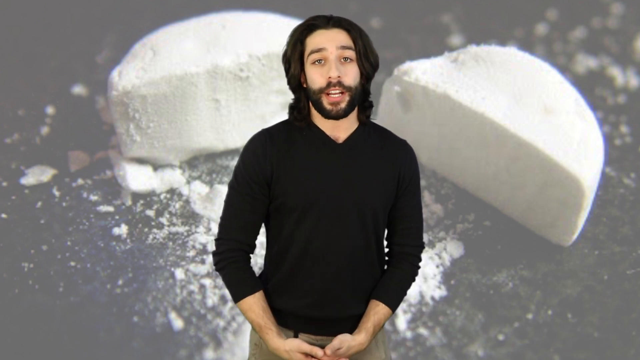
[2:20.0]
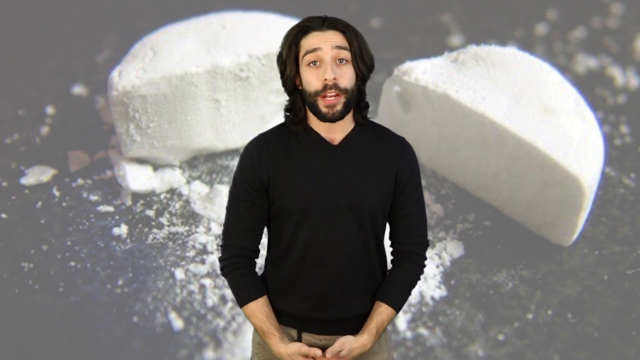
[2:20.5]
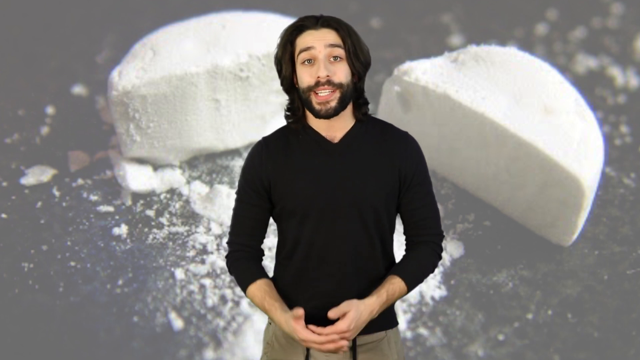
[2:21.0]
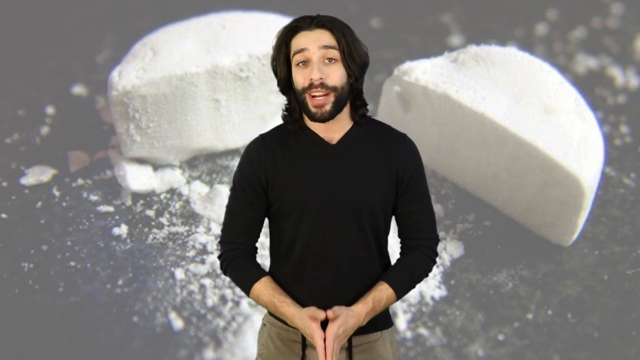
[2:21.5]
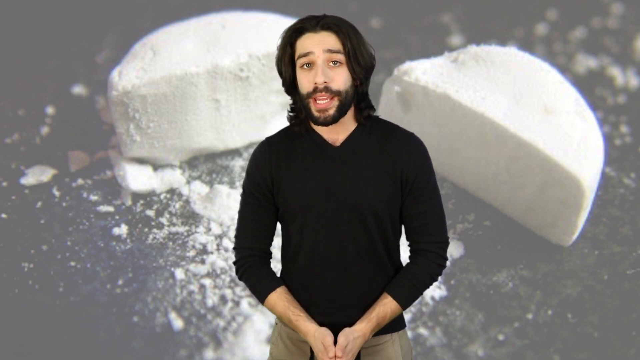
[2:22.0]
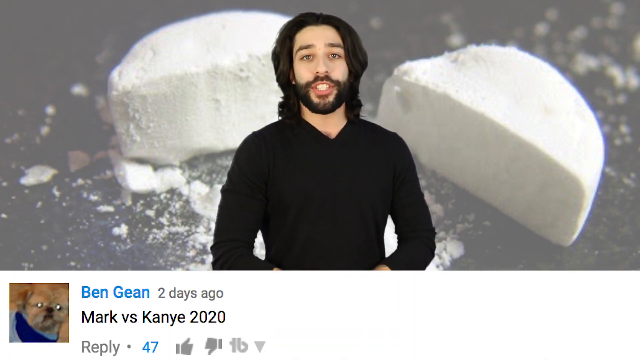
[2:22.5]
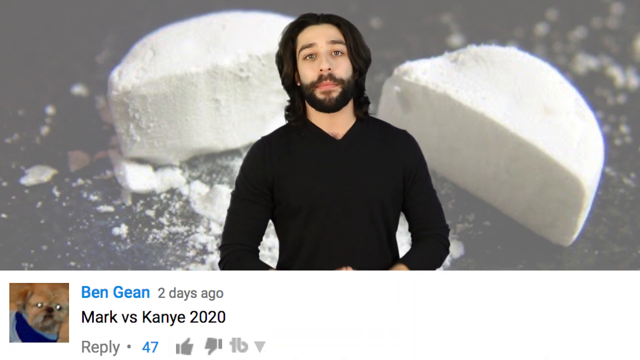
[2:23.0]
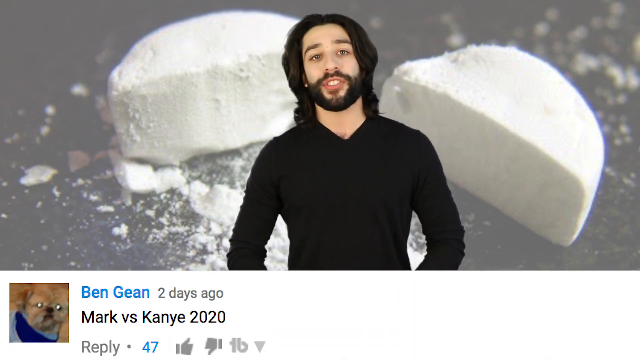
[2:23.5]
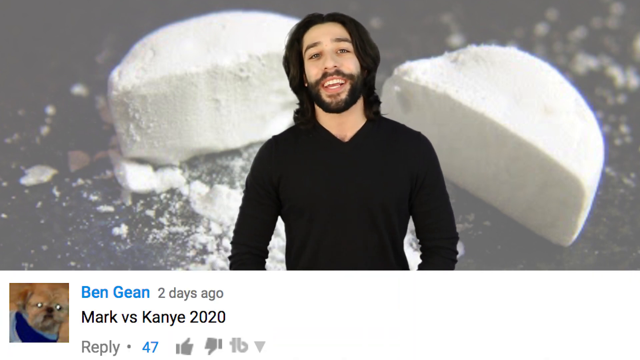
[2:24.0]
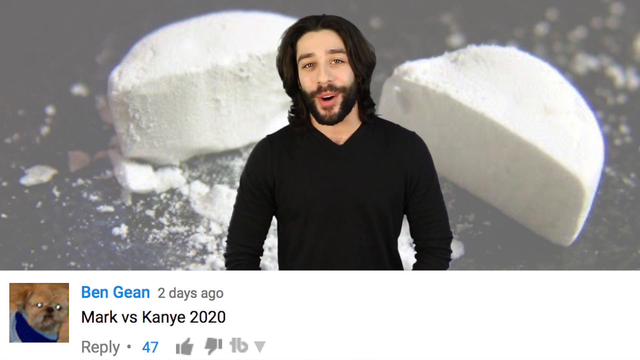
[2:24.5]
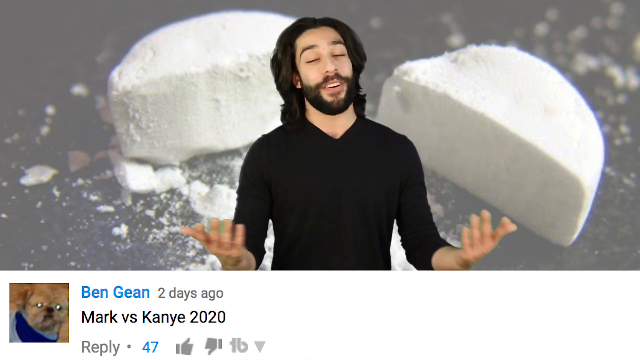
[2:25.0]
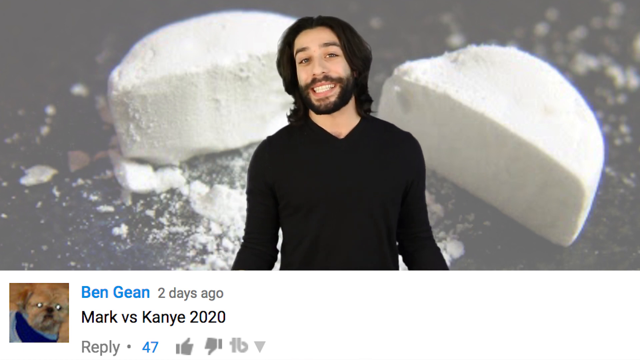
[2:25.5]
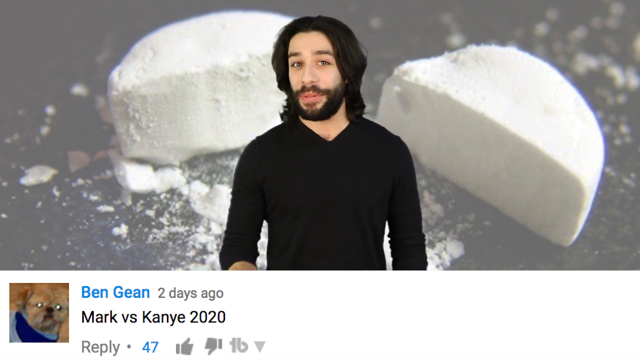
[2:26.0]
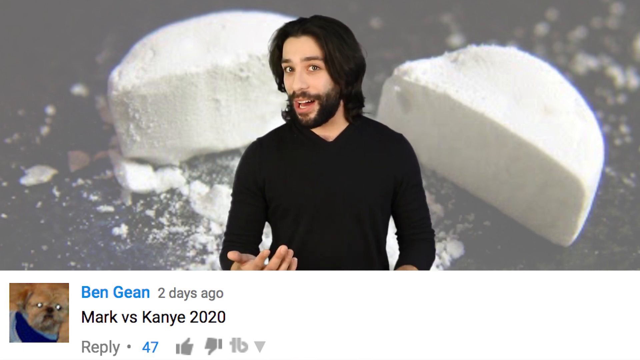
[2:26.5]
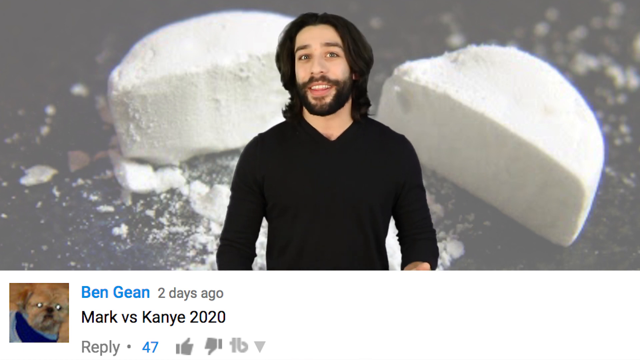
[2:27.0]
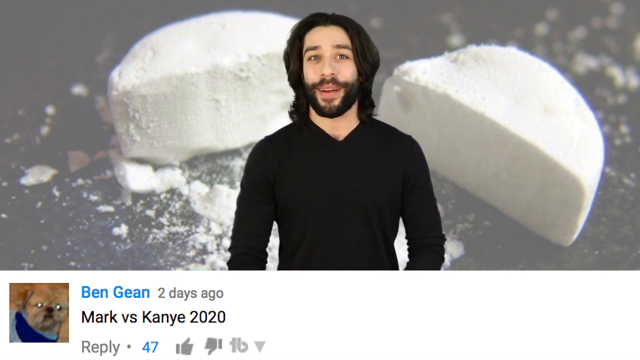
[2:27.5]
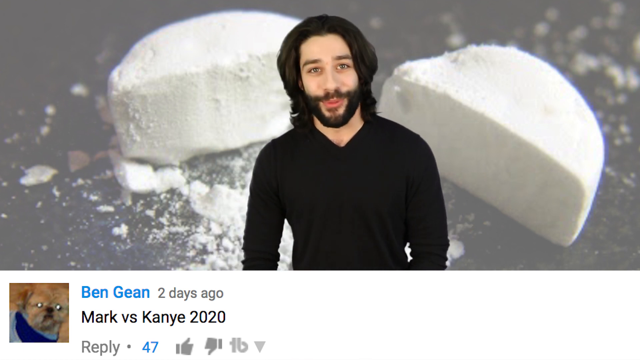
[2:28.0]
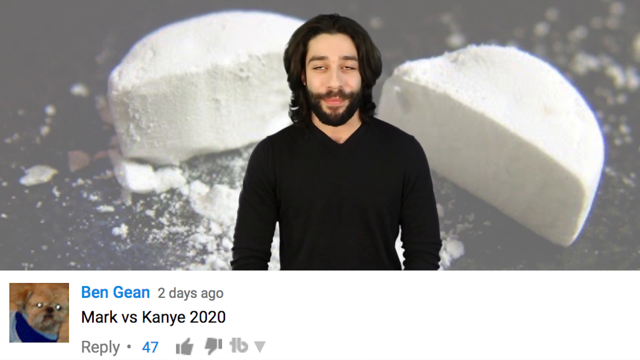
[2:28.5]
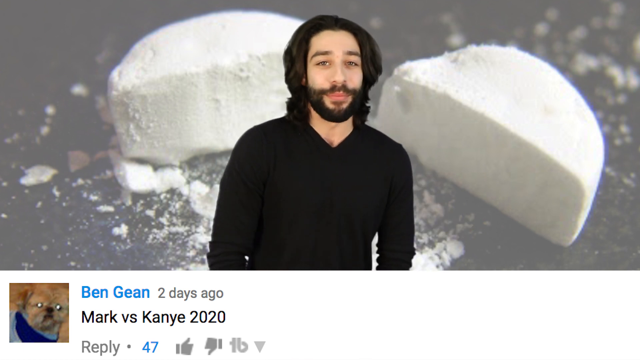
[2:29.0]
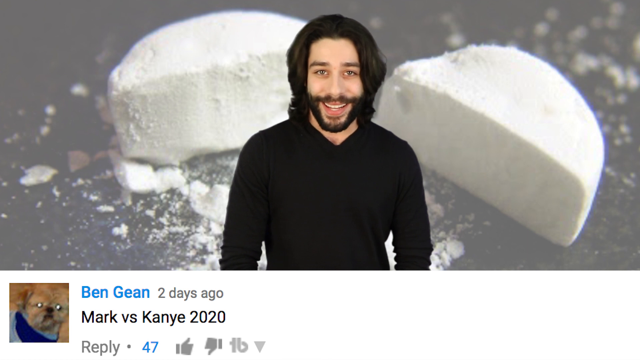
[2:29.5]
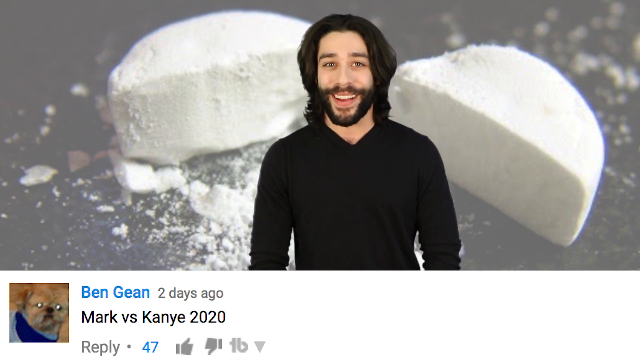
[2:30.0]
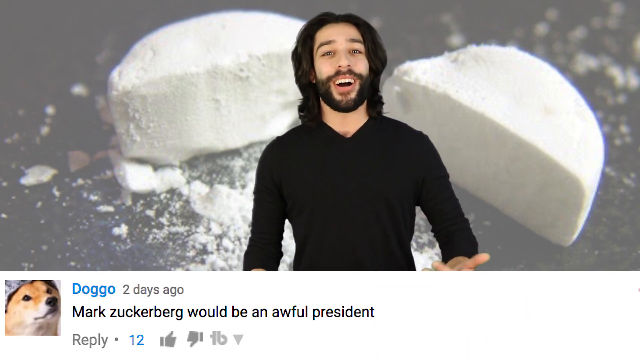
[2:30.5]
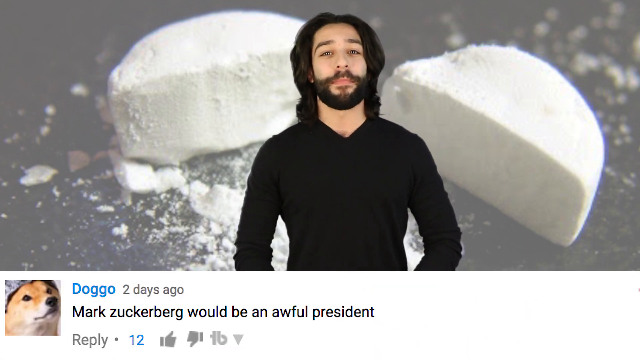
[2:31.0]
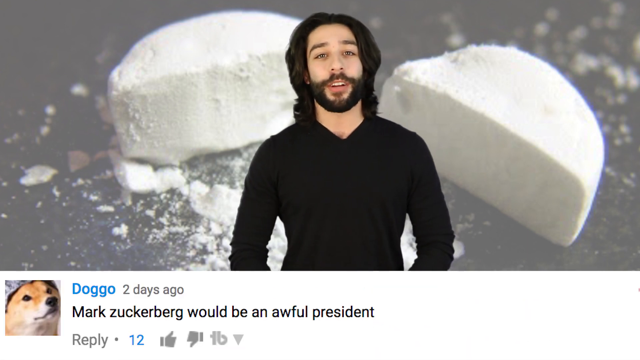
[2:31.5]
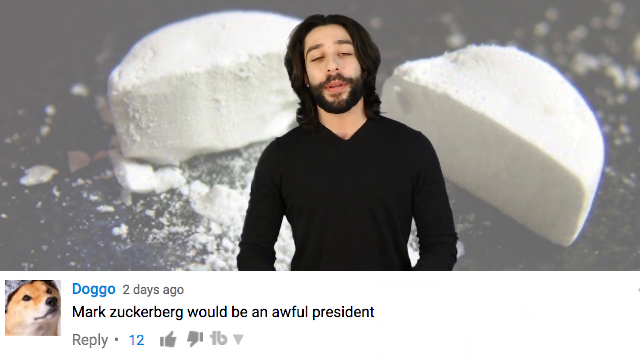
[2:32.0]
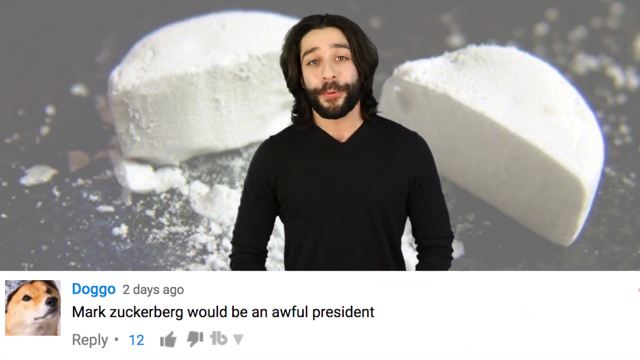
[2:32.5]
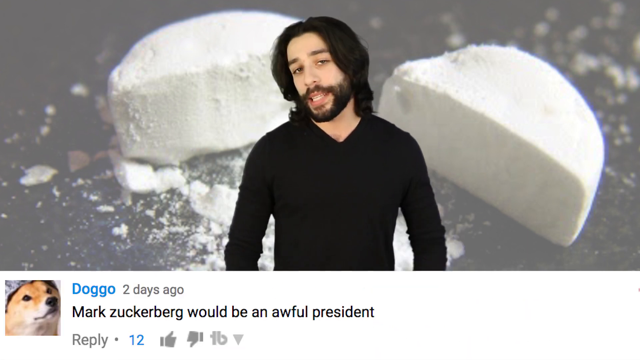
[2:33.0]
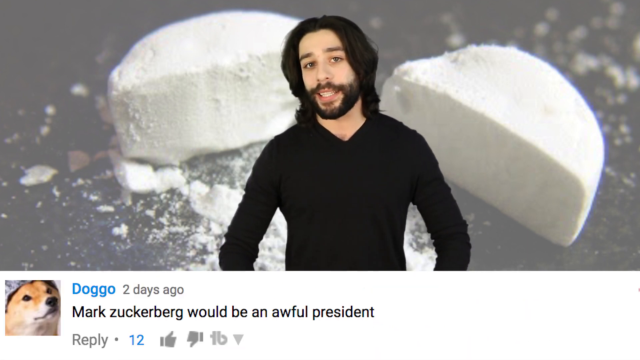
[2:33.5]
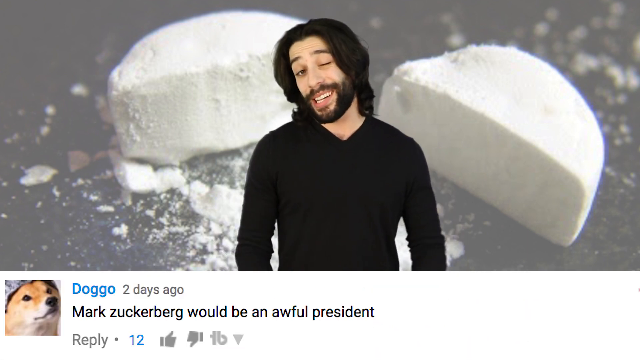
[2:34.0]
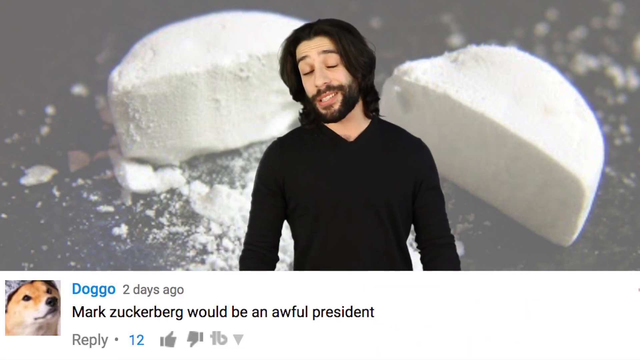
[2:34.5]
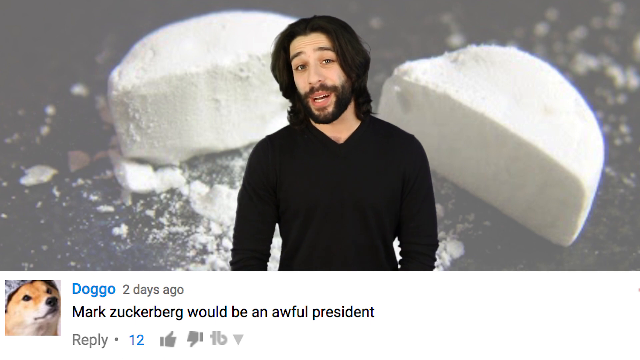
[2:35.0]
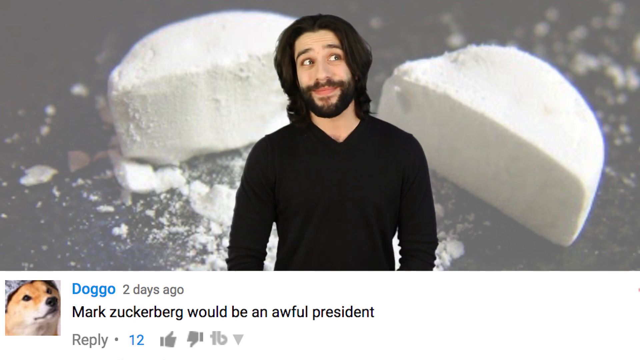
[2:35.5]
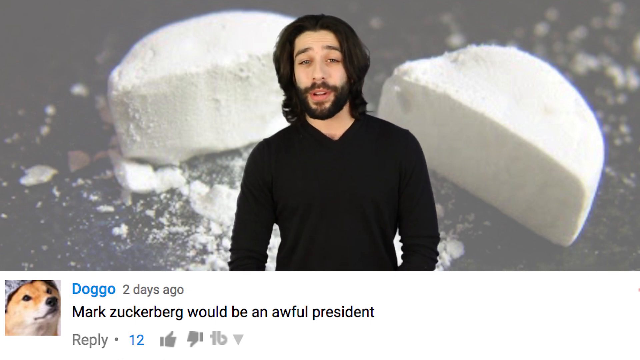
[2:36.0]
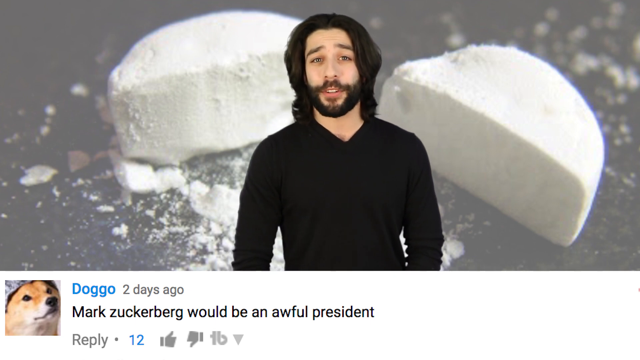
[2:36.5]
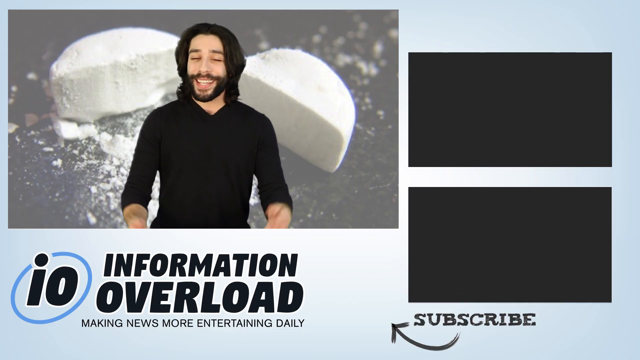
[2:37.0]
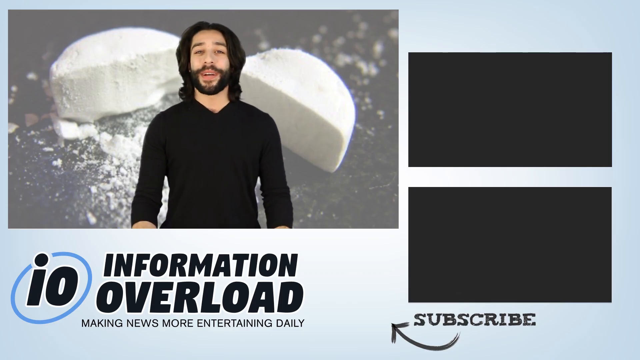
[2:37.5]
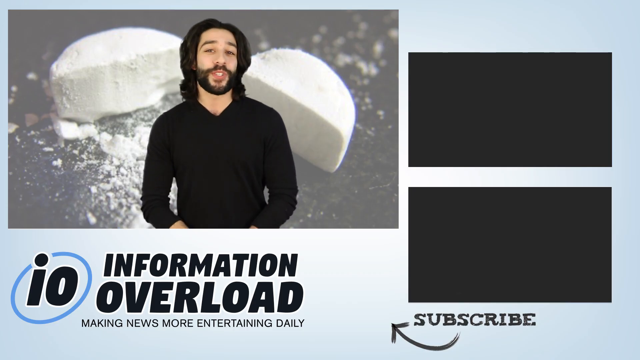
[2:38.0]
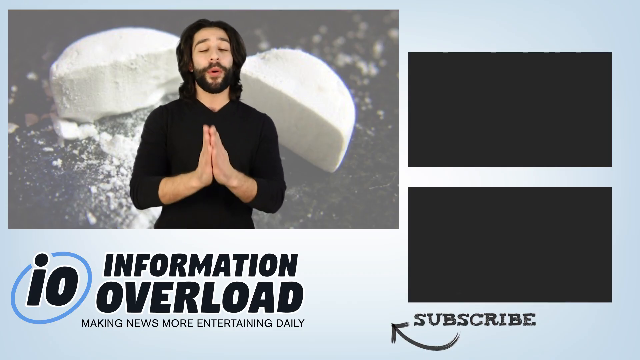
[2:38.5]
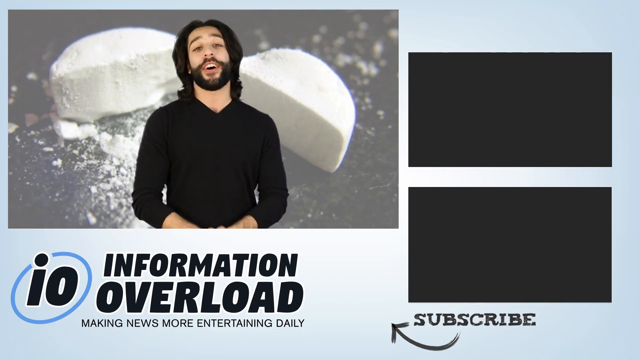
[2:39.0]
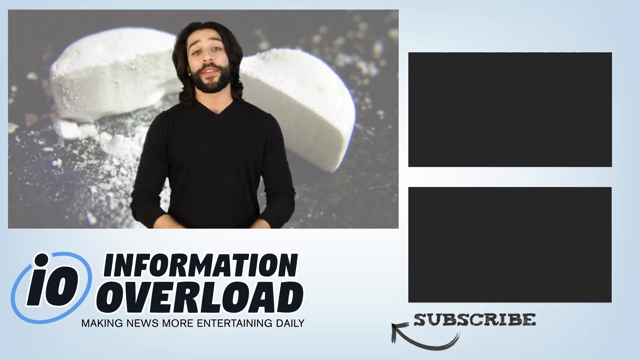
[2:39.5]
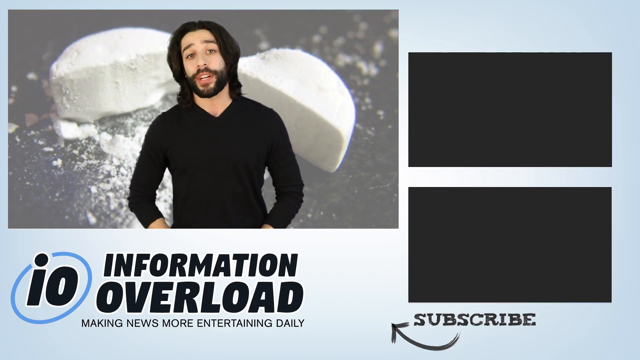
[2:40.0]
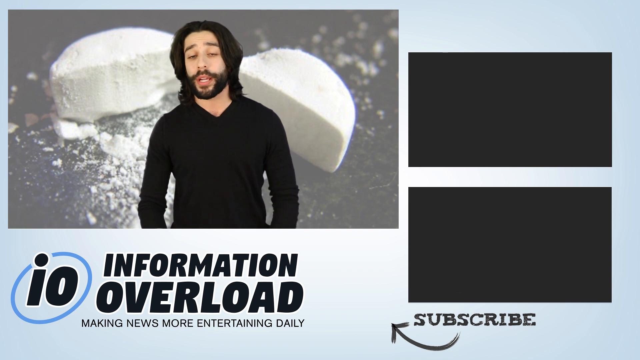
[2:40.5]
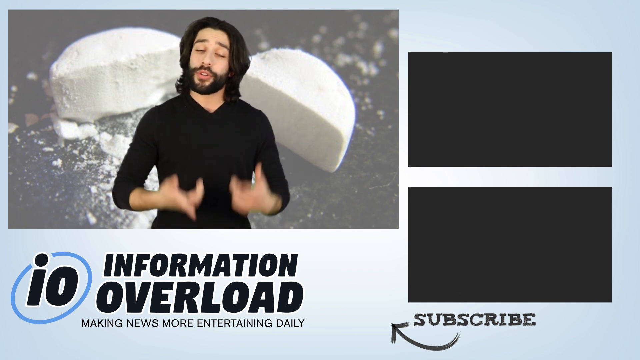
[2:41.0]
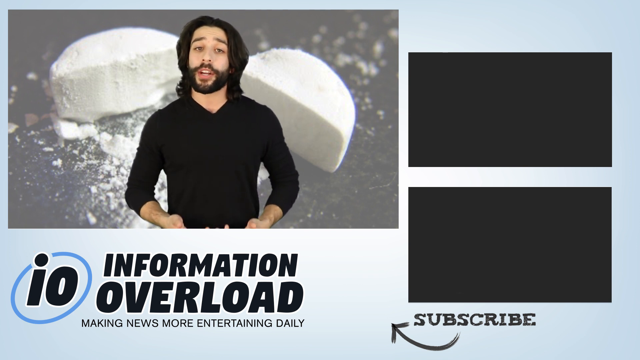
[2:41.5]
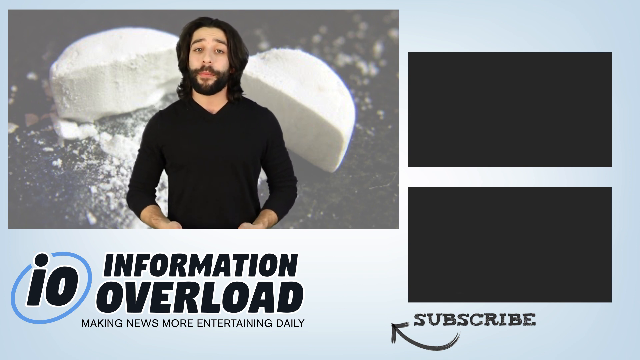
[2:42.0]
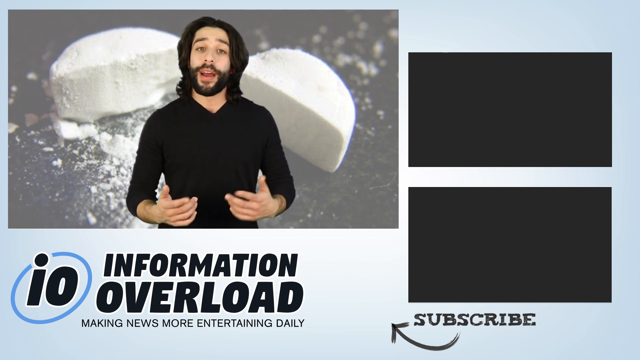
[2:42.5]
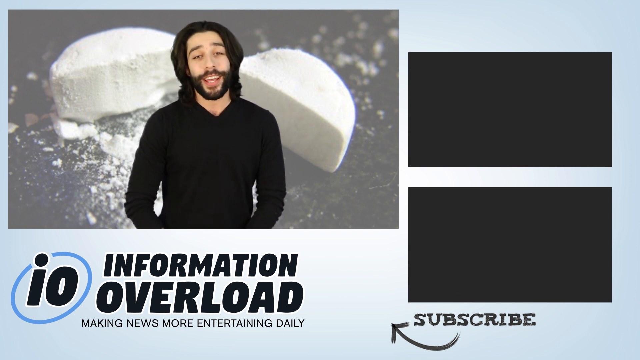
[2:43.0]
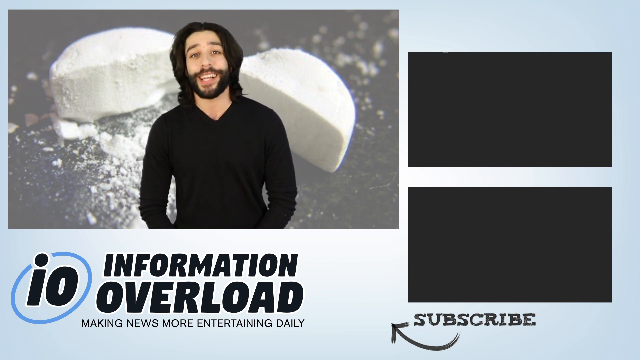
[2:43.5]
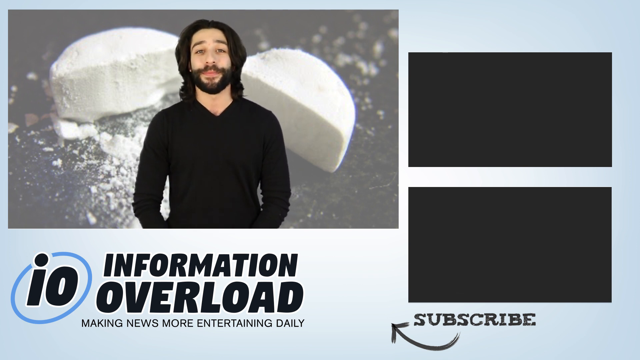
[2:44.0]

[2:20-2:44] The video returns to Jared or Jacob talking in front of the green screen. Underneath his post, tweets or Facebook comments by different people appear. One comment says that Mark Zuckerberg would be a terrible president. Another Facebook comment is something about Mark versus Kanye, apparently referring to Mark Zuckerberg. The video ends with the man still standing in front of the green screen and linking some other websites that can be clicked, possibly from his page or videos.